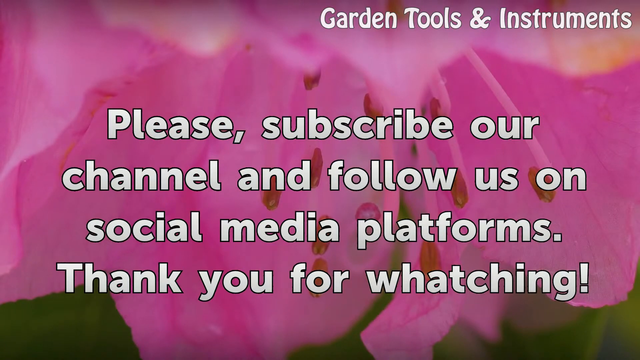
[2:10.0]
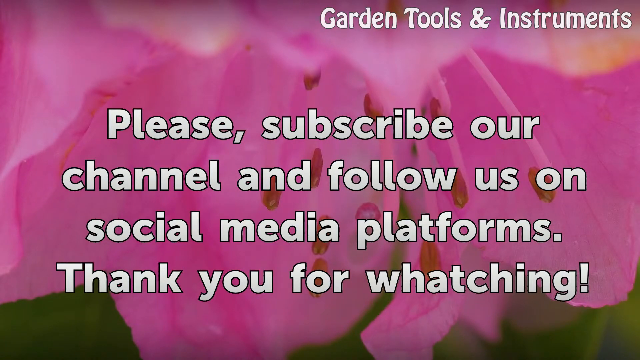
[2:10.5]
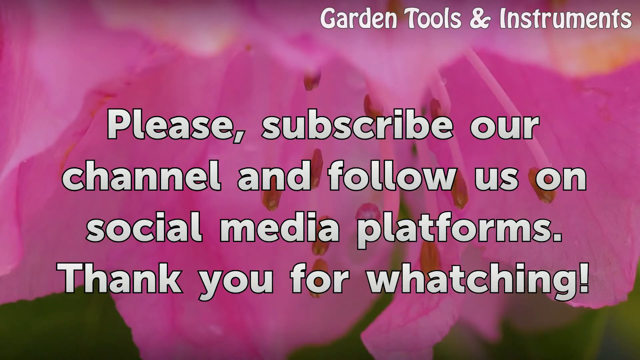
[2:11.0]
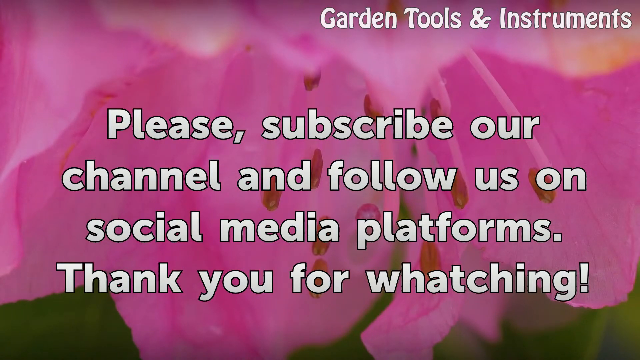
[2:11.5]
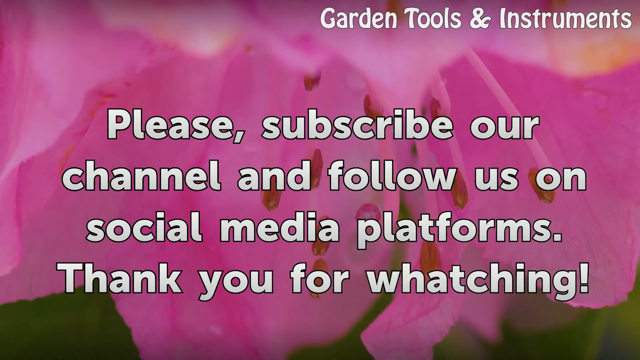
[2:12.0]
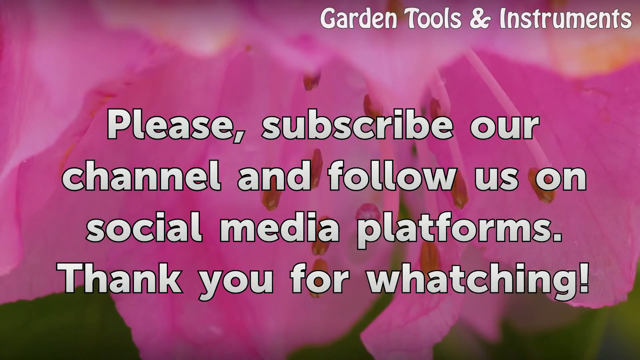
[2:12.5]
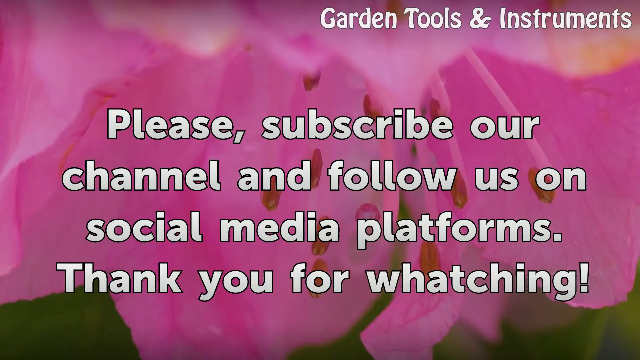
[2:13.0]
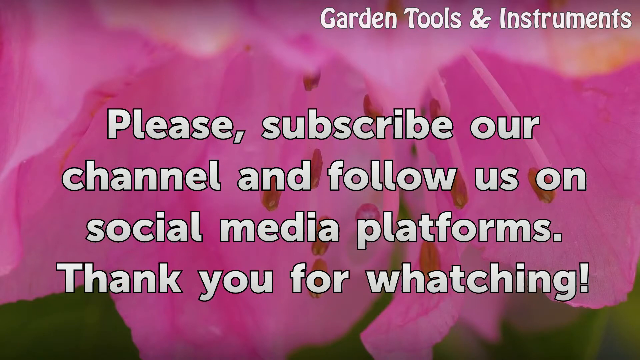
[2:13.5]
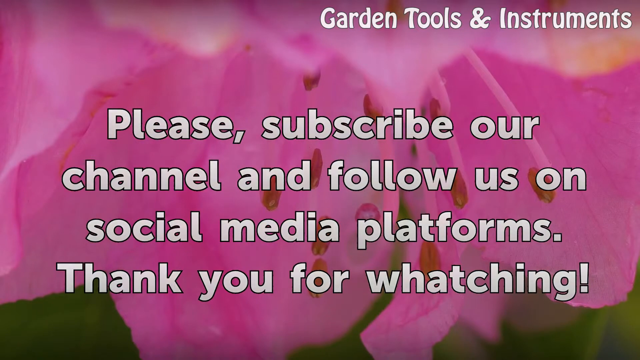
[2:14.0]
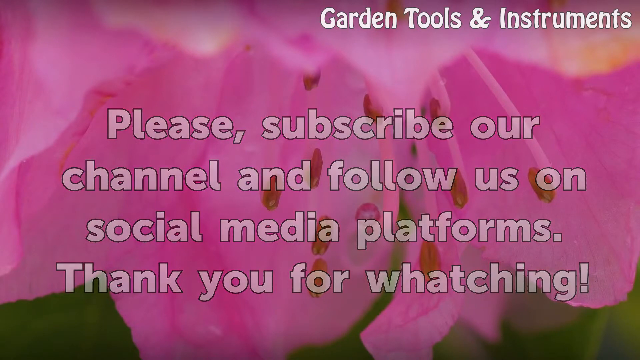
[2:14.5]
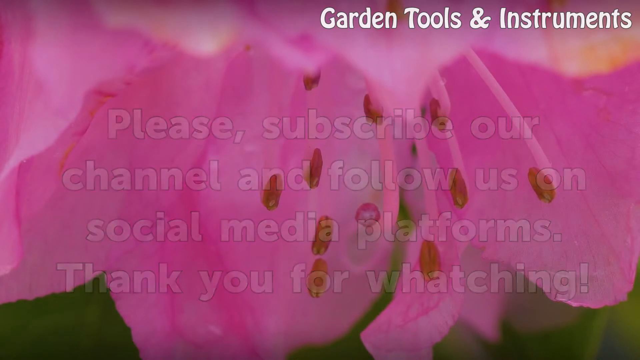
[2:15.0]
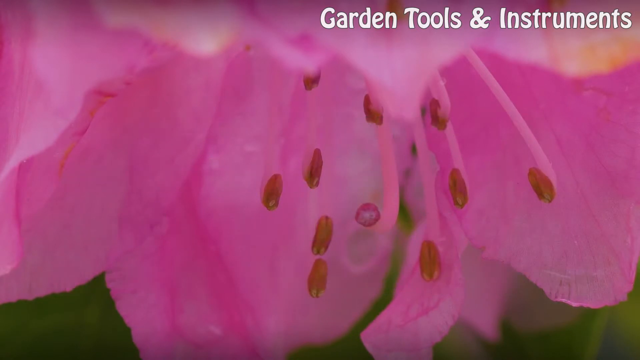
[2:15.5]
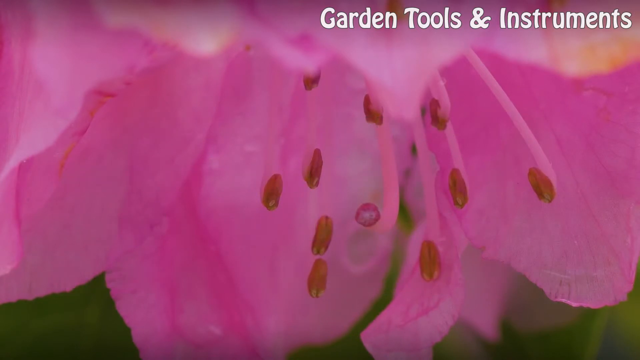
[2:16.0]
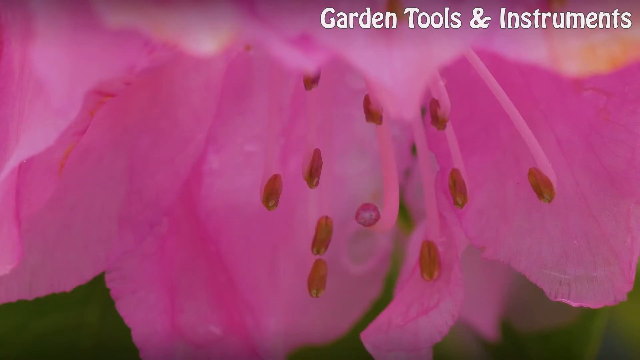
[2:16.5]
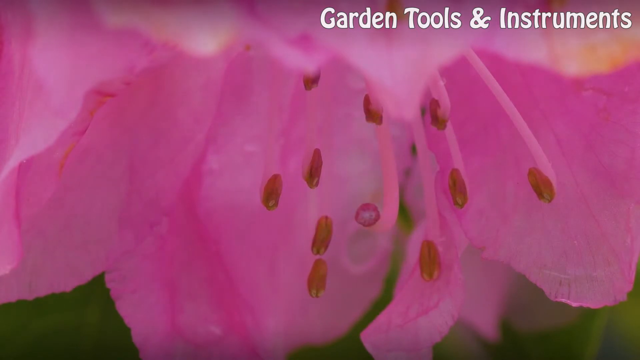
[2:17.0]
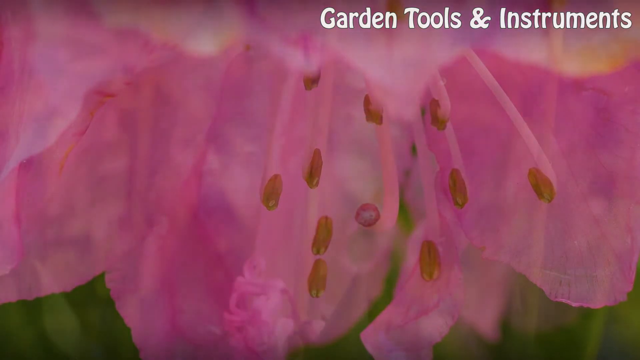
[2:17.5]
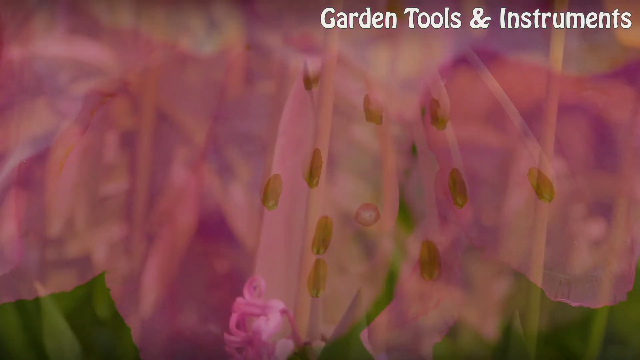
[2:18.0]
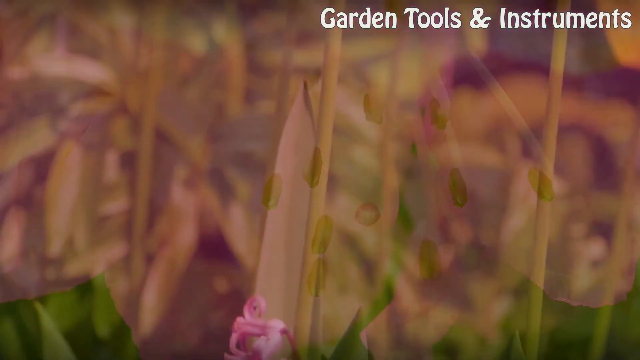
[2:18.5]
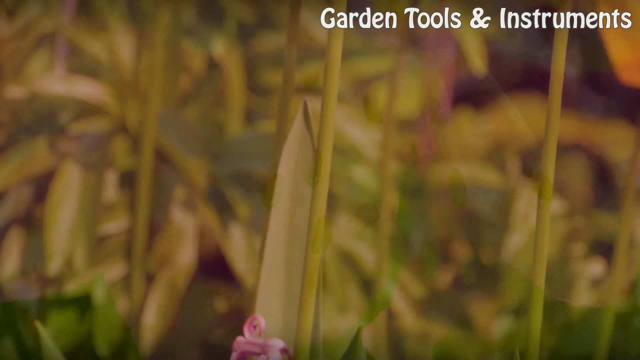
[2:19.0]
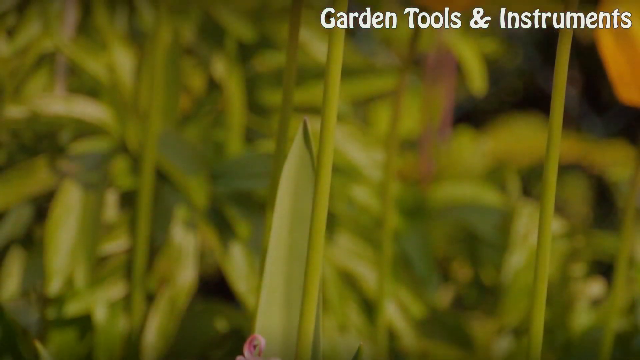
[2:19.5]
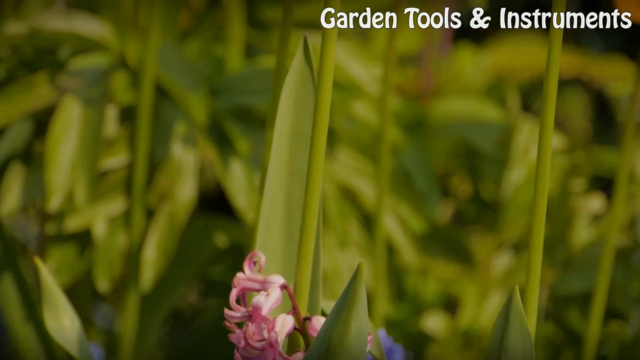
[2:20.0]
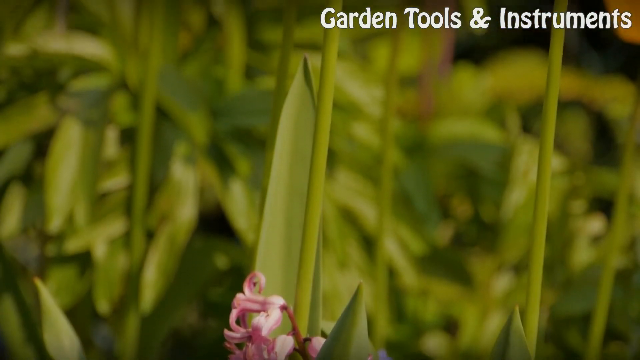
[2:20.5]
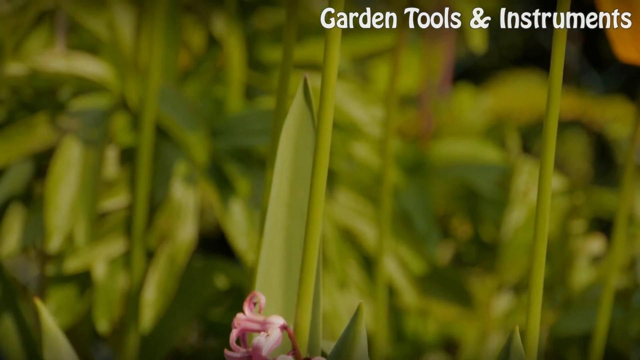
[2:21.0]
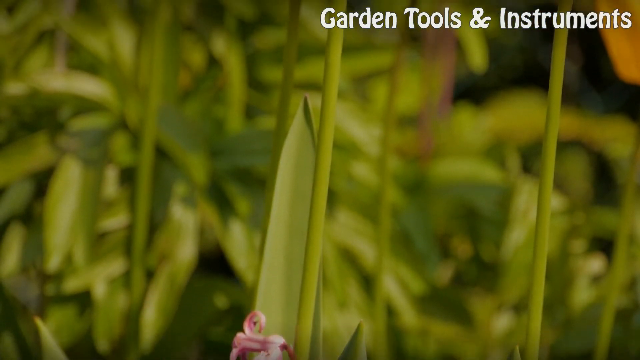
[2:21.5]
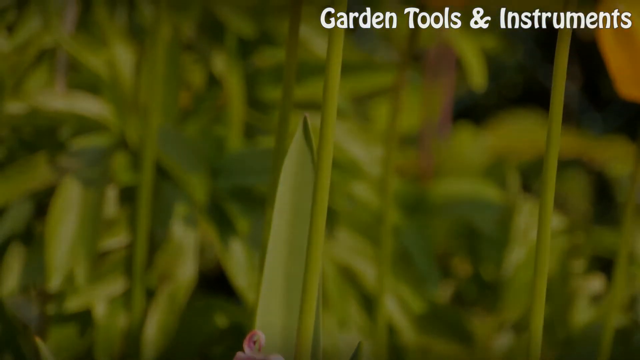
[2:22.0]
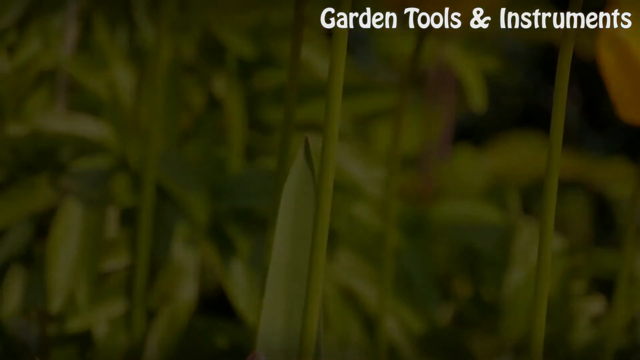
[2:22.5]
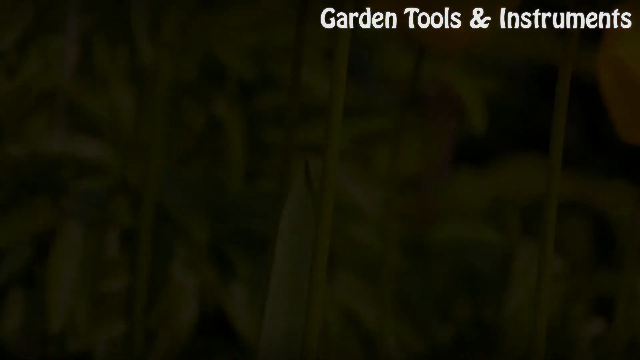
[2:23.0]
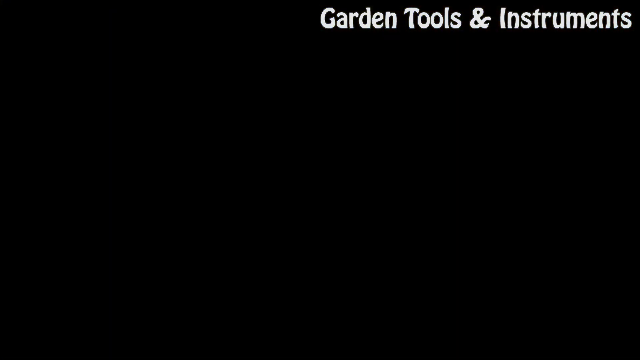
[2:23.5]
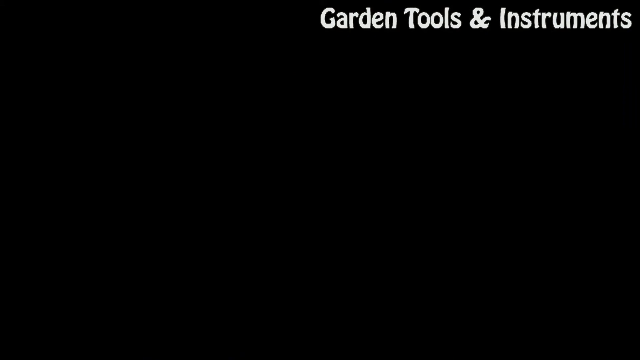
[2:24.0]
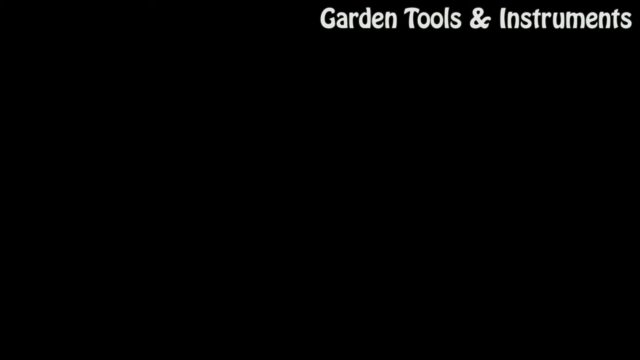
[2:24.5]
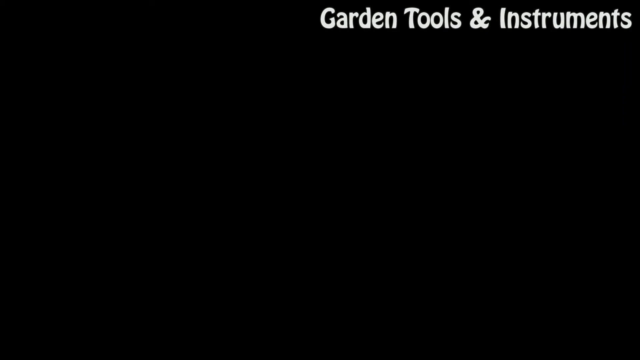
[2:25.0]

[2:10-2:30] The background is a zoomed-in shot of a bright pink-petaled flower, apparently near its center, where long, light pink, stringy filaments stick up with light brown, oval-shaped balls at their ends; there appear to be roughly 7 or 8 filaments. Large white text covering the screen reads "please subscribe our channel and follow us on social media platforms. Thank you for watching." The text then disappears and the background video changes to an area of long, skinny, green-stemmed plants, somewhat lined up, as the camera pans up a long stem. The video then goes to a black screen with "garden tools and instruments" in white bubble letters in the top right corner.